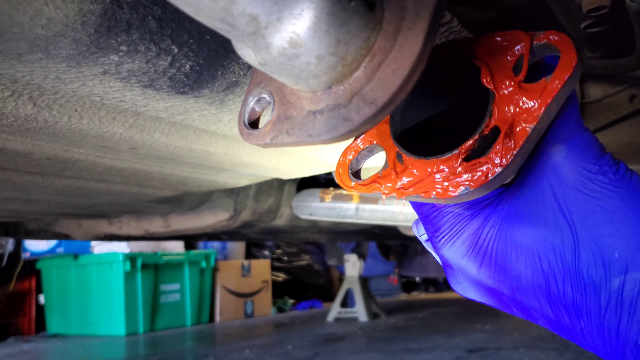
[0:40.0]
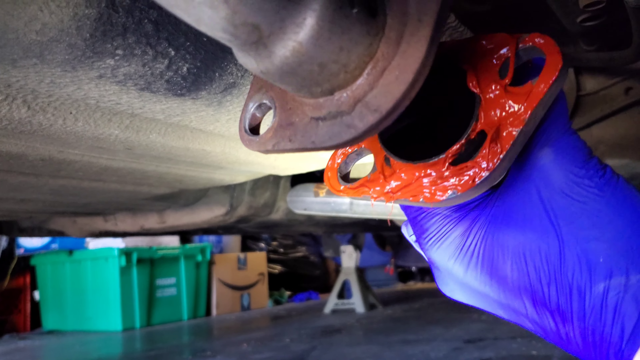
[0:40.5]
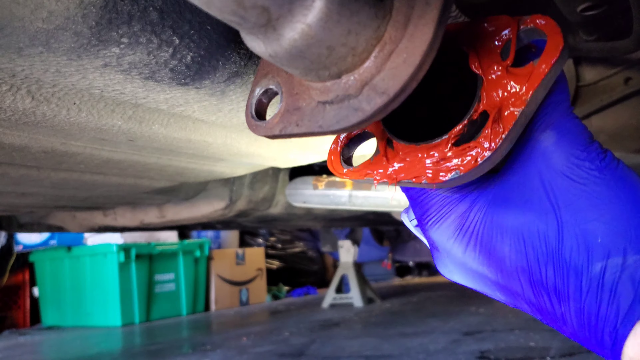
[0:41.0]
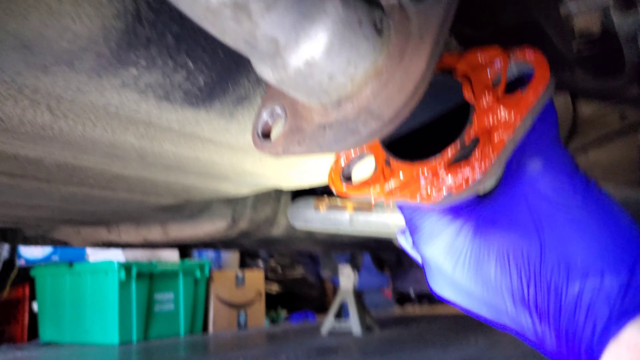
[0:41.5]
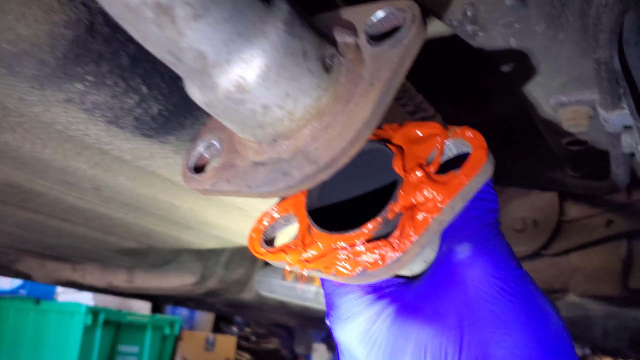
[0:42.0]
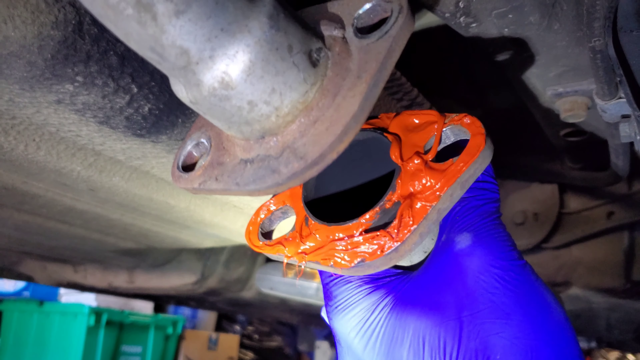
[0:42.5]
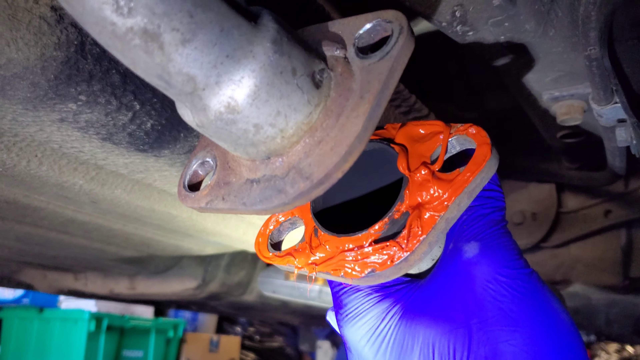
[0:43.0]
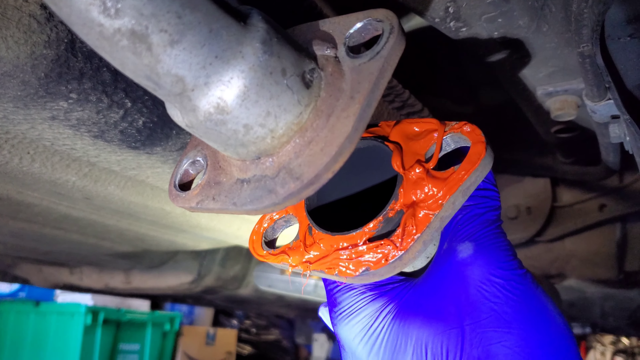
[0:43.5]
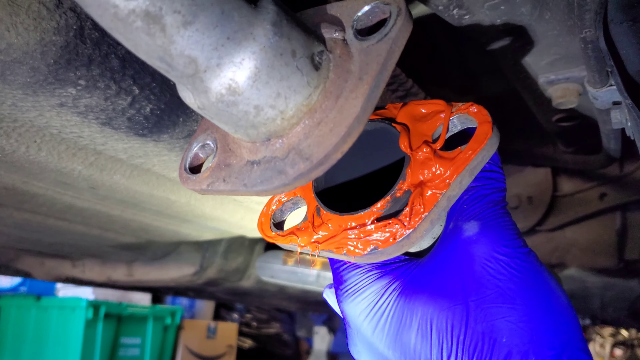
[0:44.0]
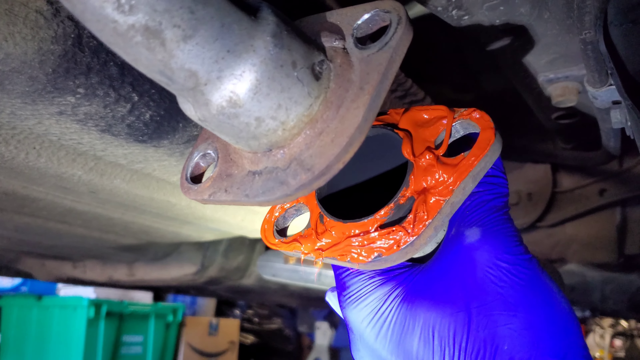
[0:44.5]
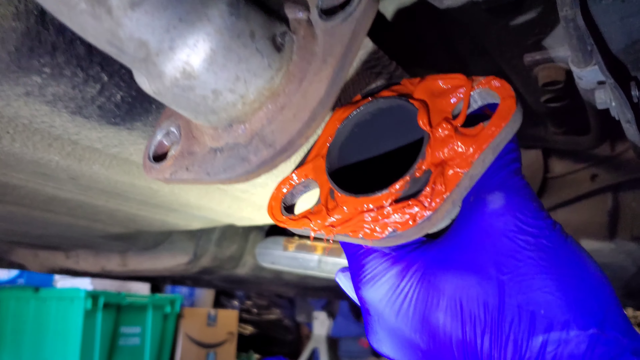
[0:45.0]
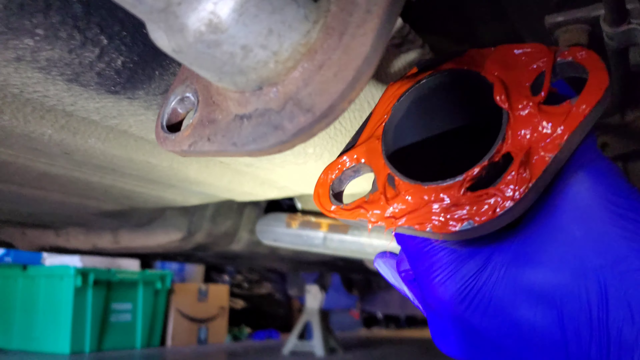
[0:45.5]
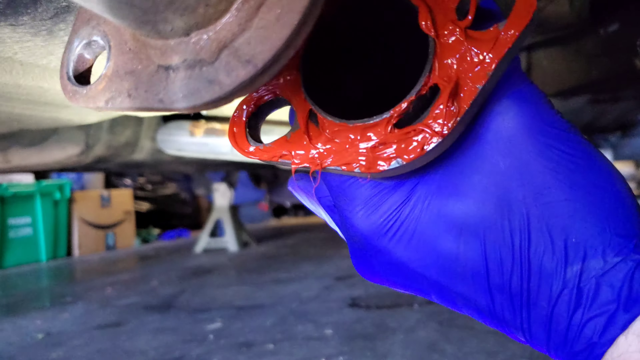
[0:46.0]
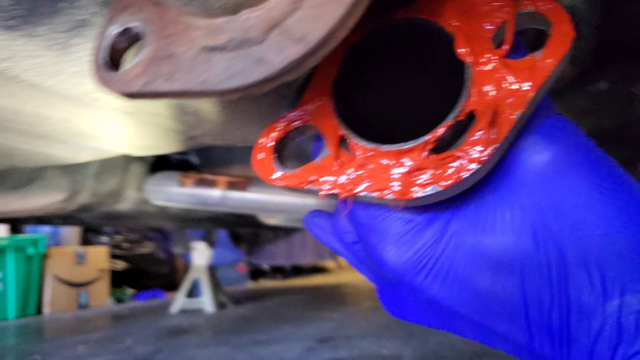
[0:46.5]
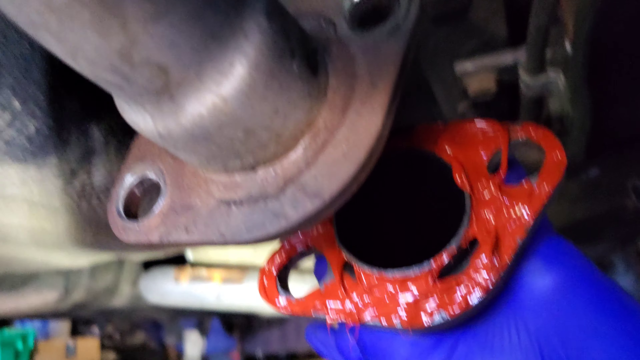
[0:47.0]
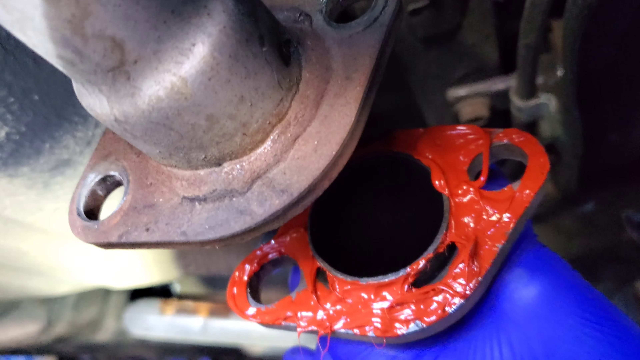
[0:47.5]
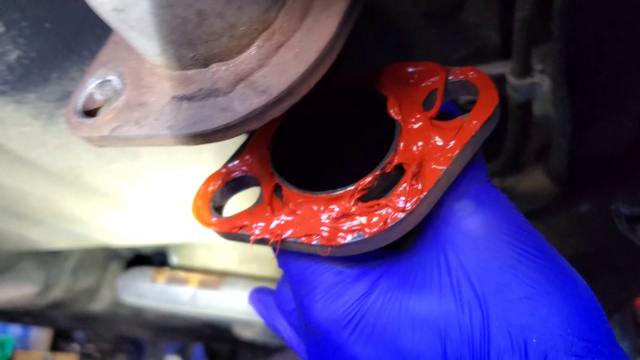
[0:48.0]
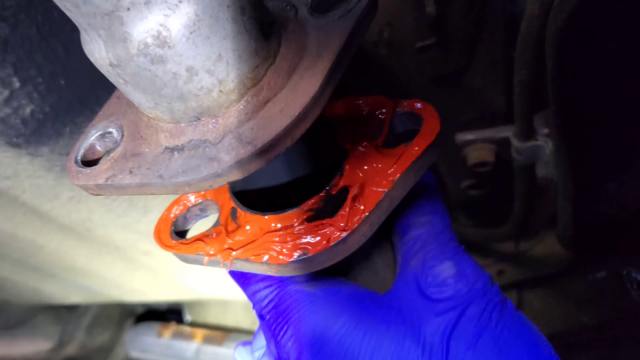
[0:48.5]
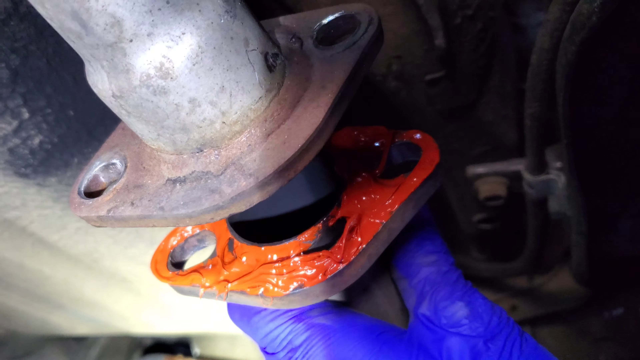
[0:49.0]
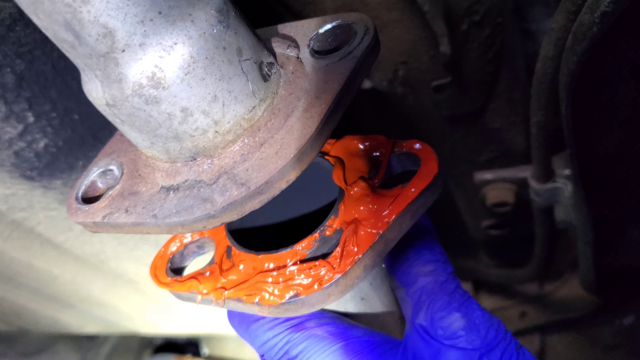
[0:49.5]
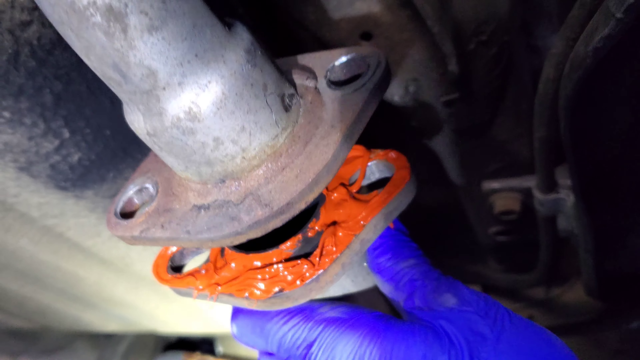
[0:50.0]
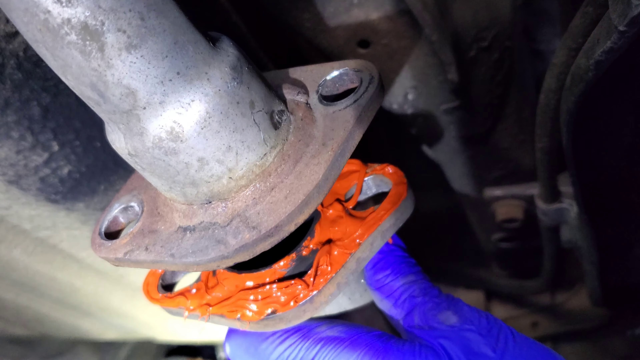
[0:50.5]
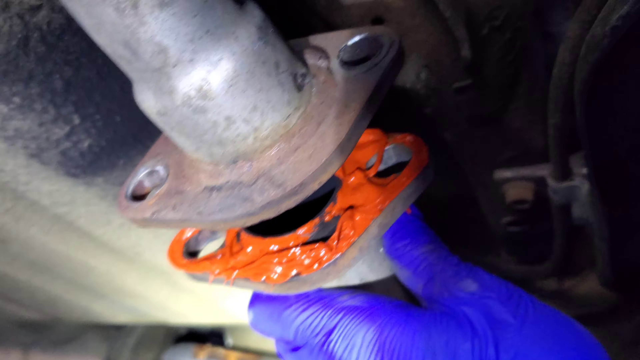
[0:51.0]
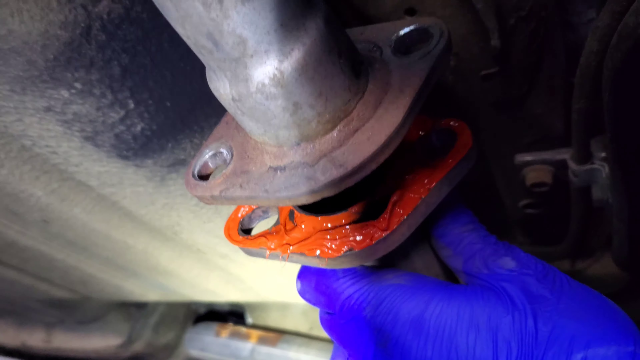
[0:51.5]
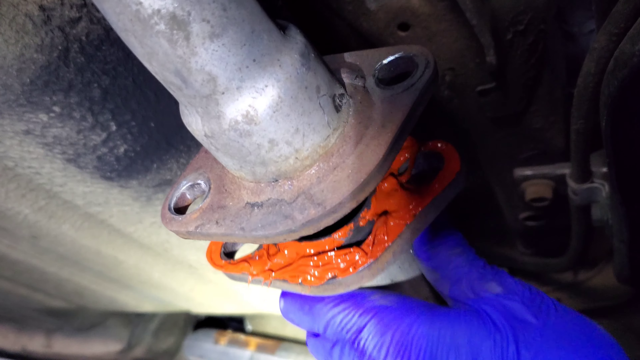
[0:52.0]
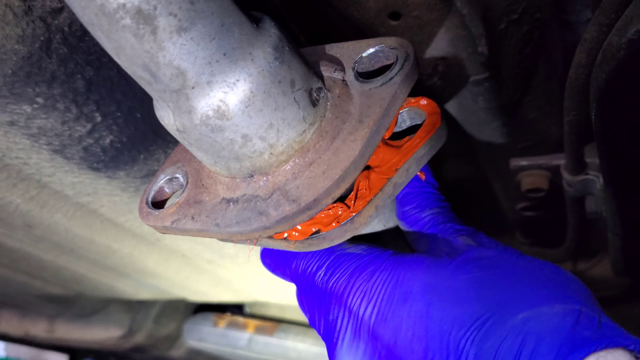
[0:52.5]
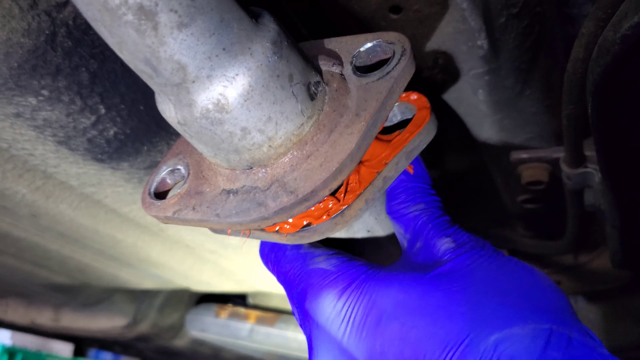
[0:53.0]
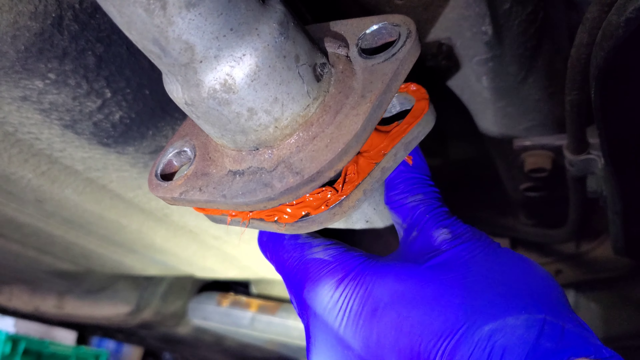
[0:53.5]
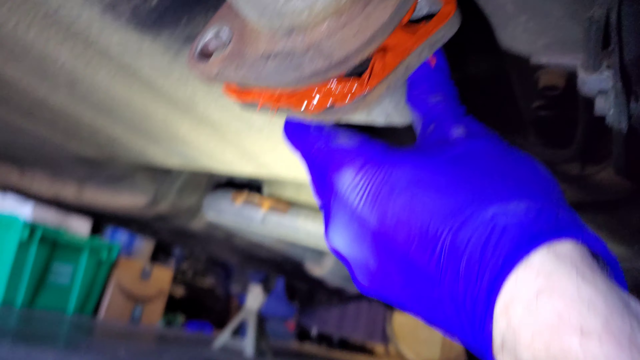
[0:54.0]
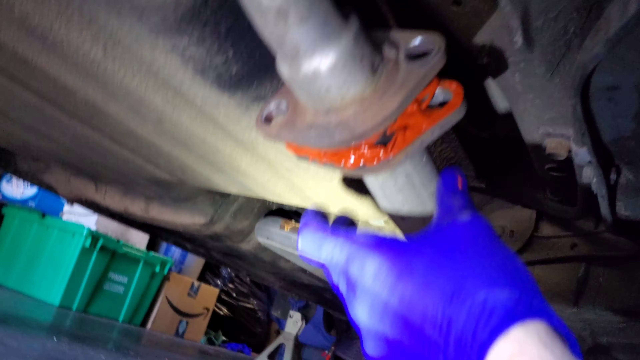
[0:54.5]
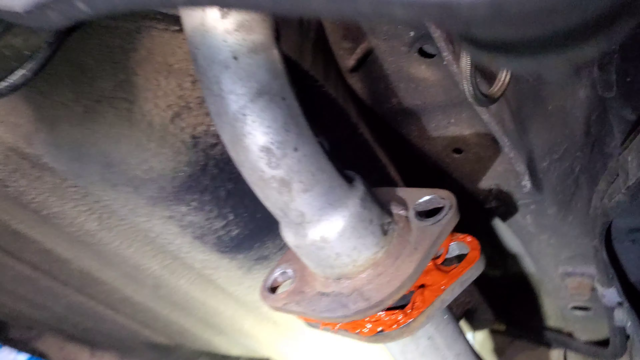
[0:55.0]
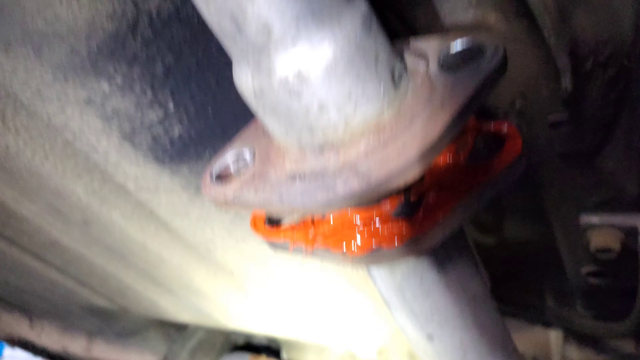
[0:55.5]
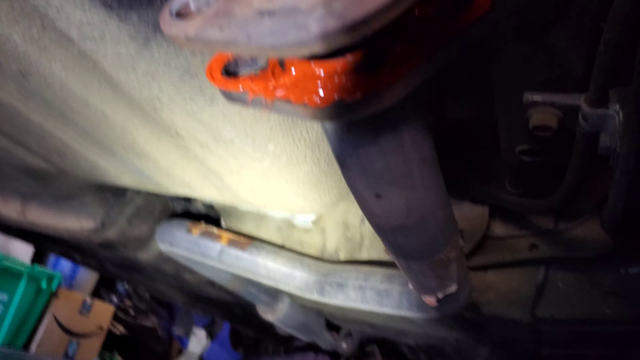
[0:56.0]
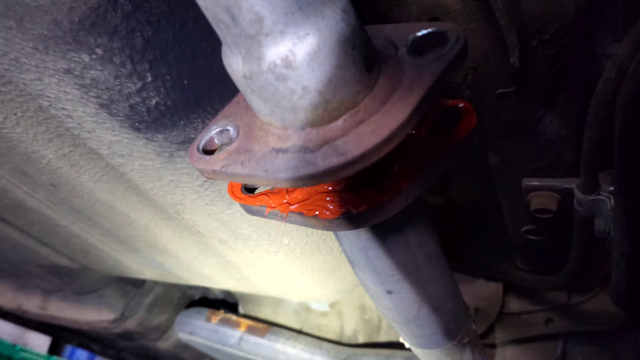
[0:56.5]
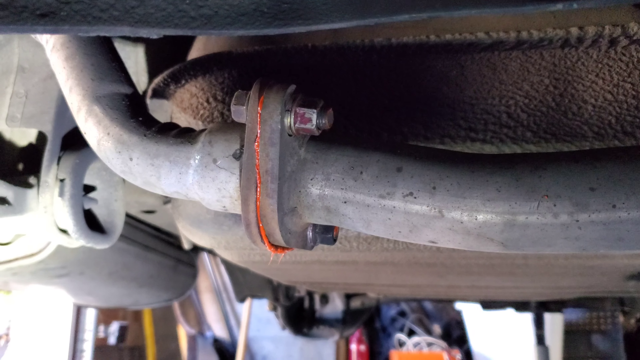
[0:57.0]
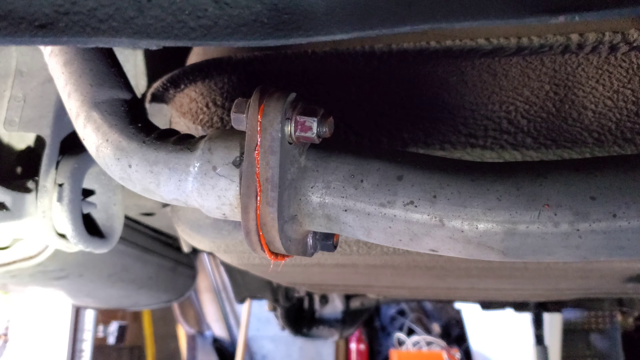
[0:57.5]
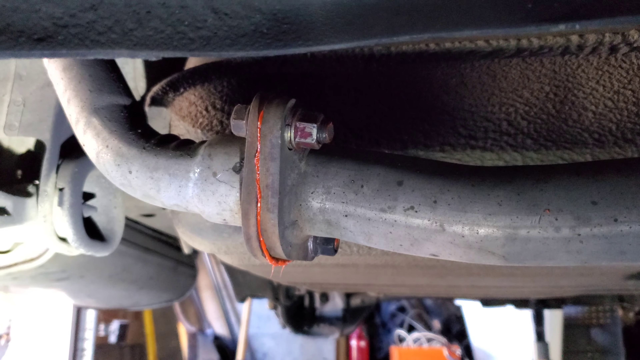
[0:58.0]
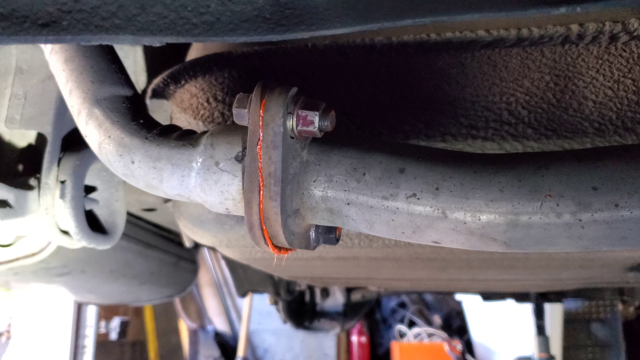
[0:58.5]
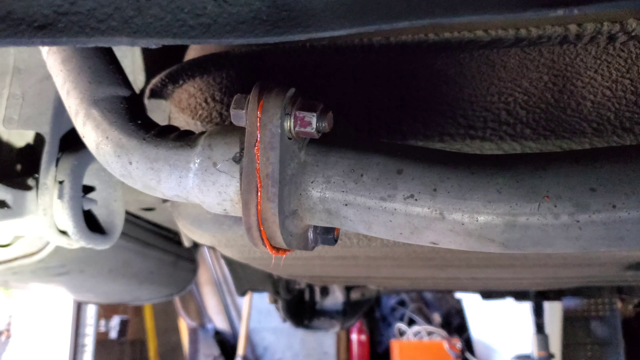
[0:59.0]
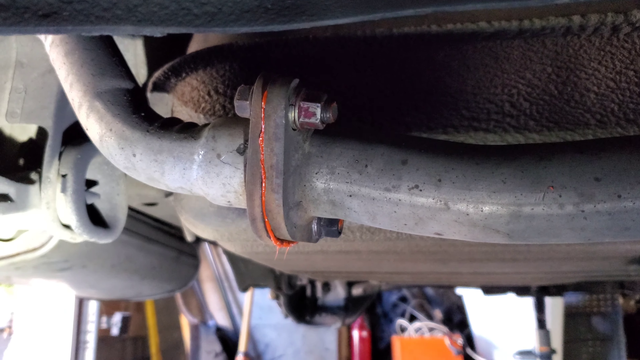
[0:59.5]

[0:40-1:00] Metal bits, pieces and parts are underneath a vehicle that is raised off the floor in a garage. There are two pieces of silver tube, and the one on the right-hand side is held by a hand wearing a thin blue glove. The end of this piece of tube is covered liberally with a large amount of thick orange liquid. The person holds this part closer to the other tube, positioning the two so they are close together. The two pieces of tube are then fixed together completely, with two large nuts on either side screwing them together. The orange liquid is still visible in between, being squeezed together in the tube. It seems to connect the two pieces of tube into one piece underneath the vehicle.